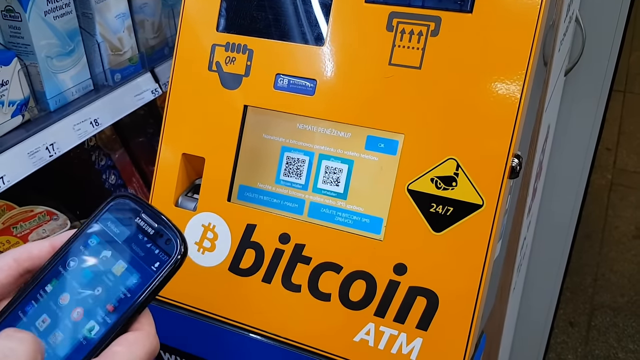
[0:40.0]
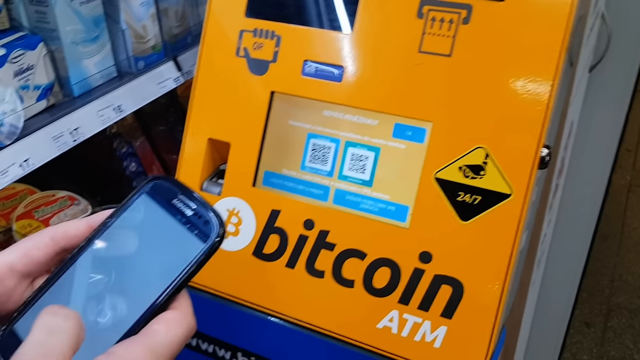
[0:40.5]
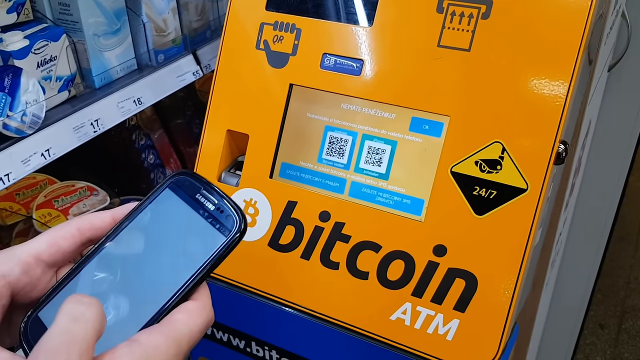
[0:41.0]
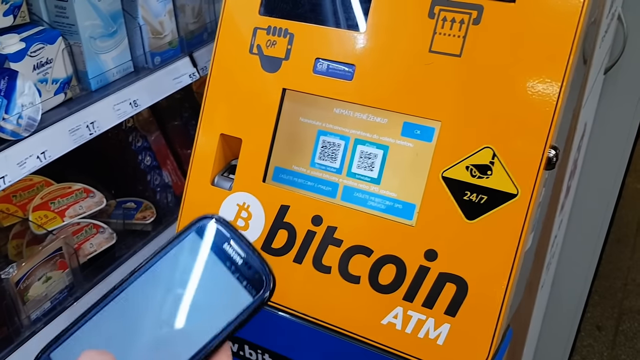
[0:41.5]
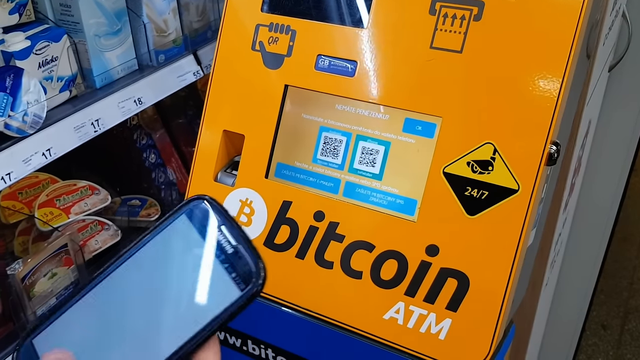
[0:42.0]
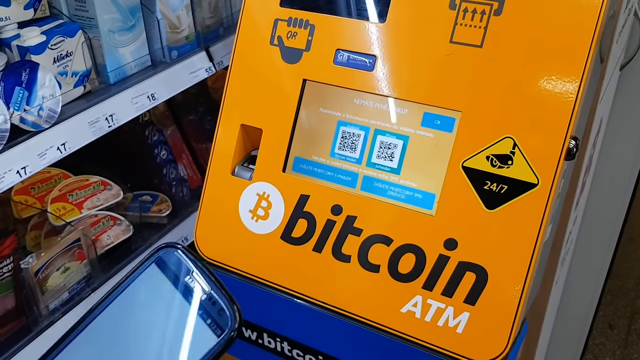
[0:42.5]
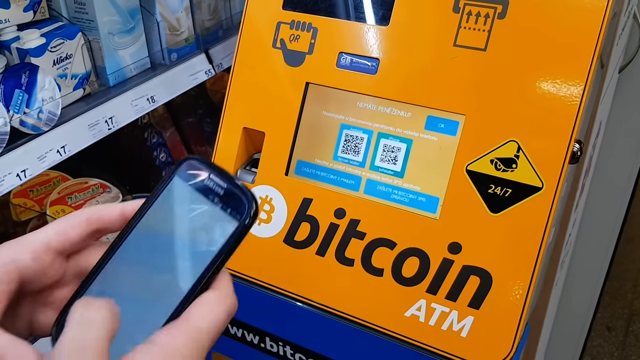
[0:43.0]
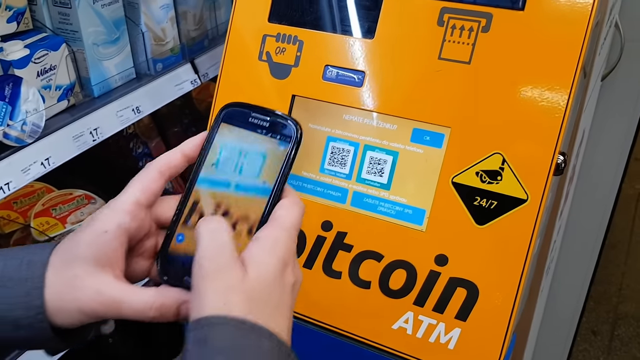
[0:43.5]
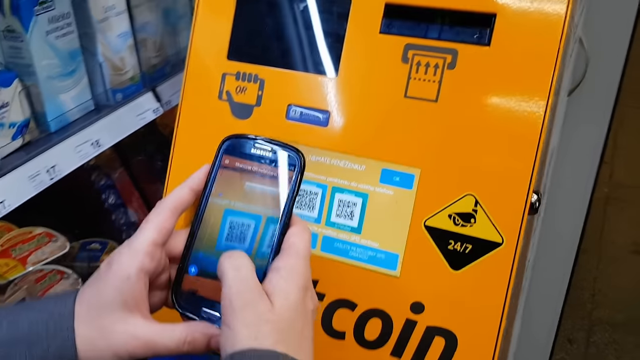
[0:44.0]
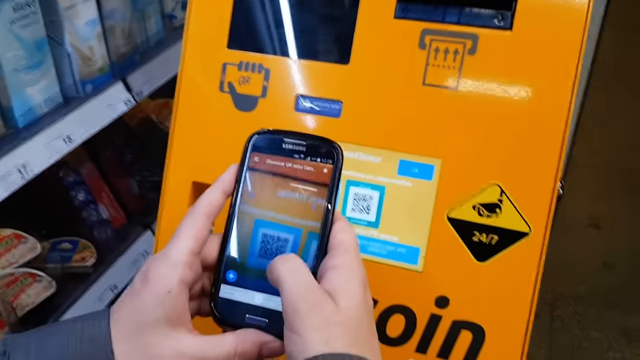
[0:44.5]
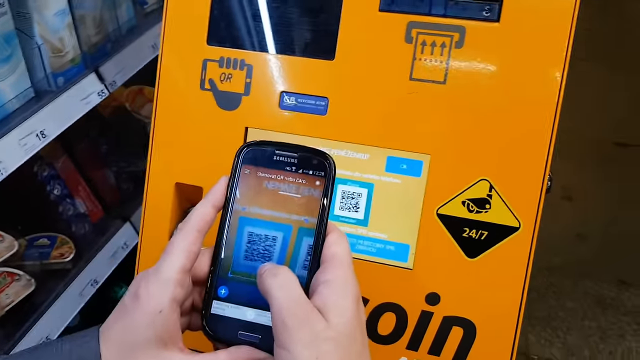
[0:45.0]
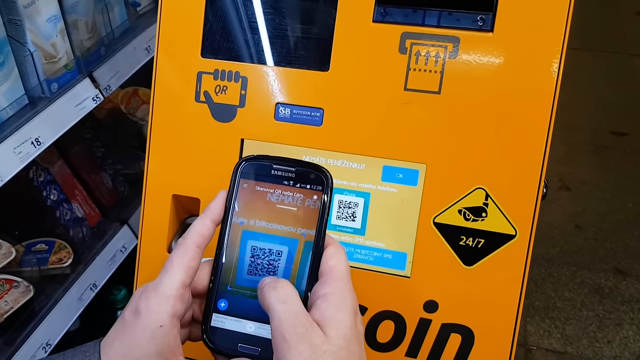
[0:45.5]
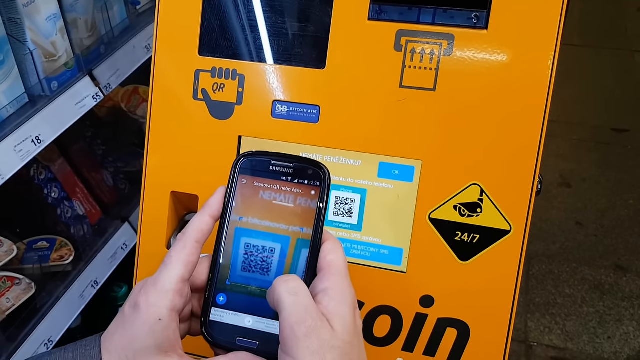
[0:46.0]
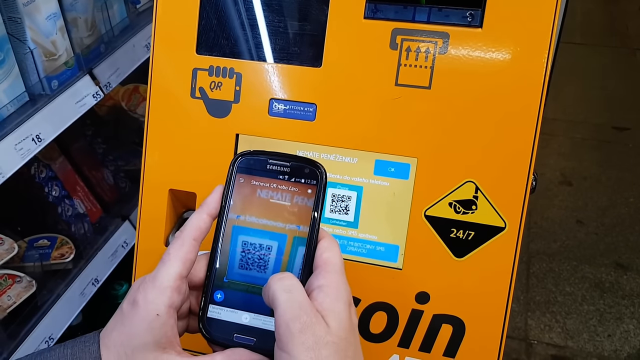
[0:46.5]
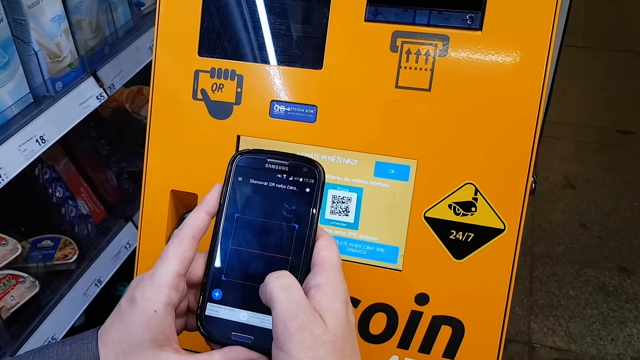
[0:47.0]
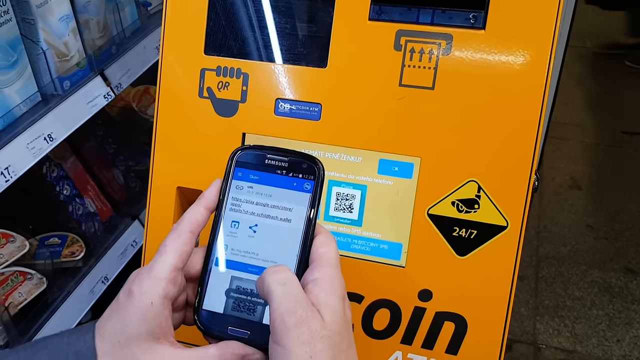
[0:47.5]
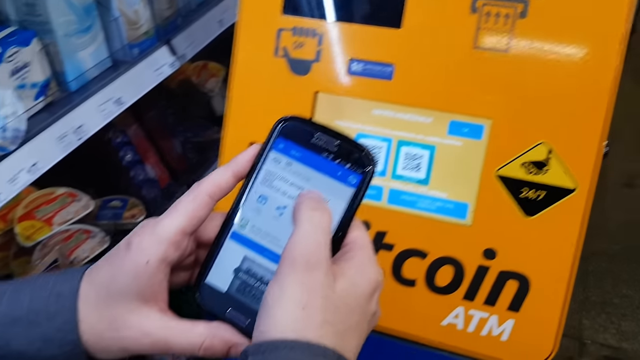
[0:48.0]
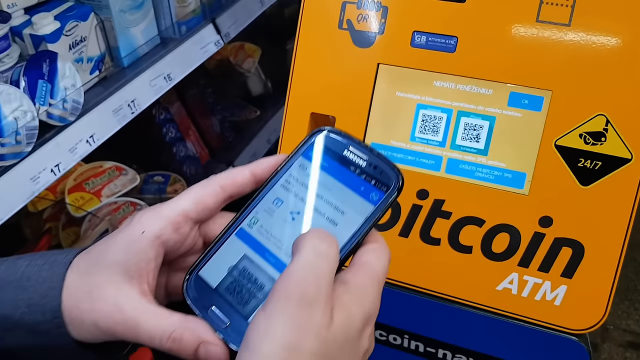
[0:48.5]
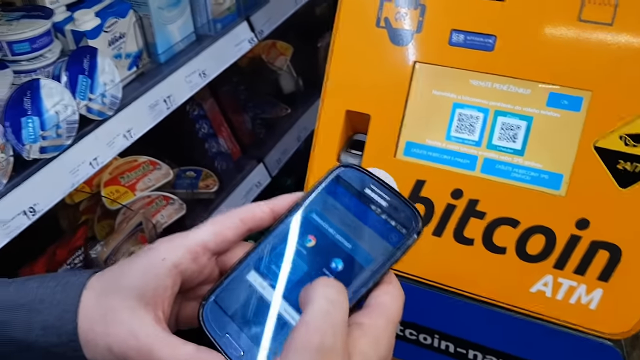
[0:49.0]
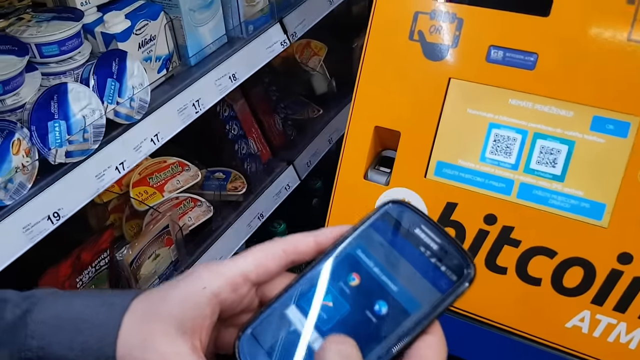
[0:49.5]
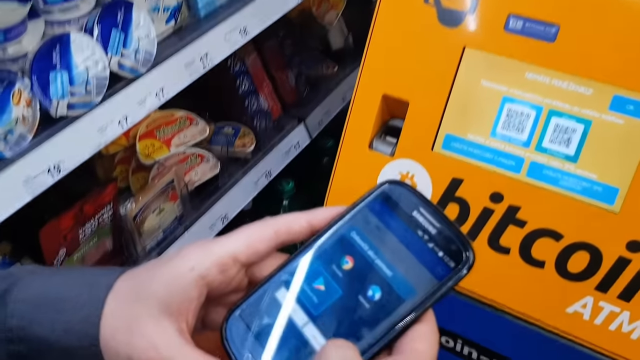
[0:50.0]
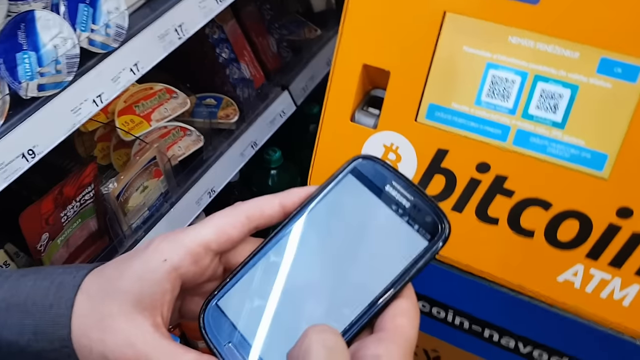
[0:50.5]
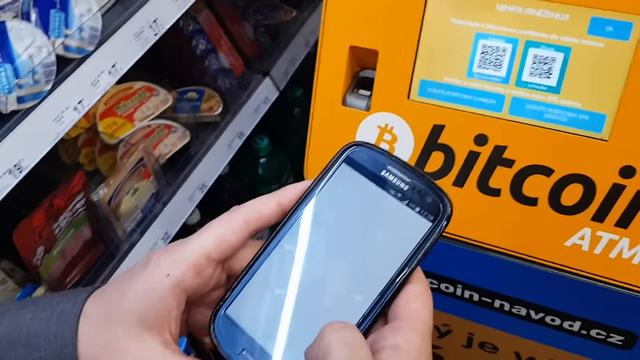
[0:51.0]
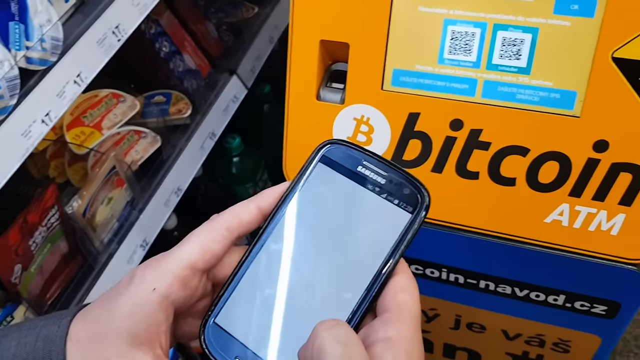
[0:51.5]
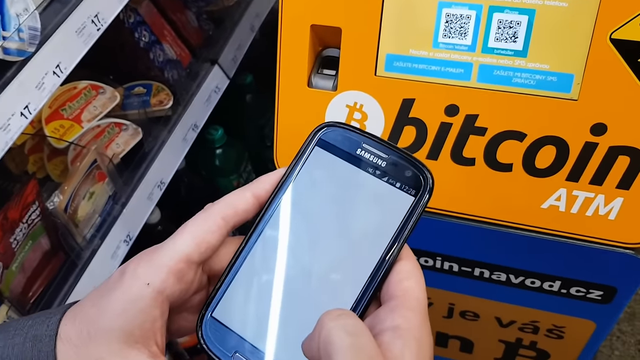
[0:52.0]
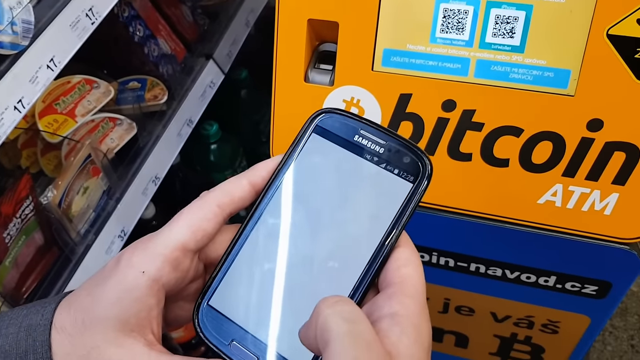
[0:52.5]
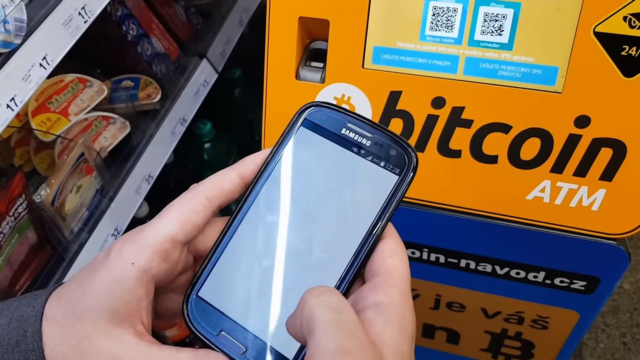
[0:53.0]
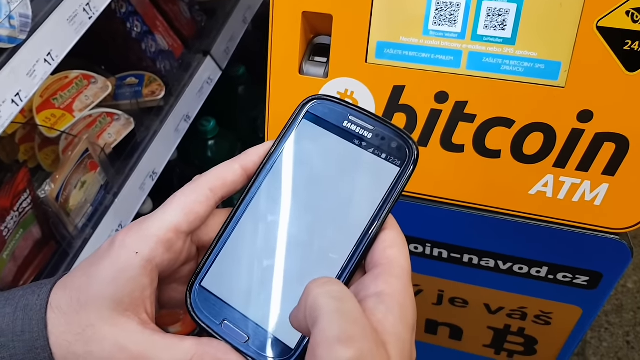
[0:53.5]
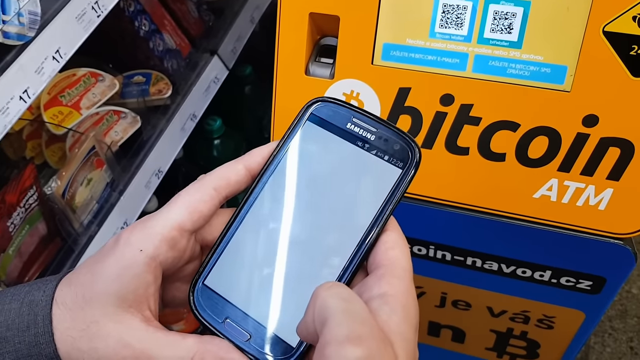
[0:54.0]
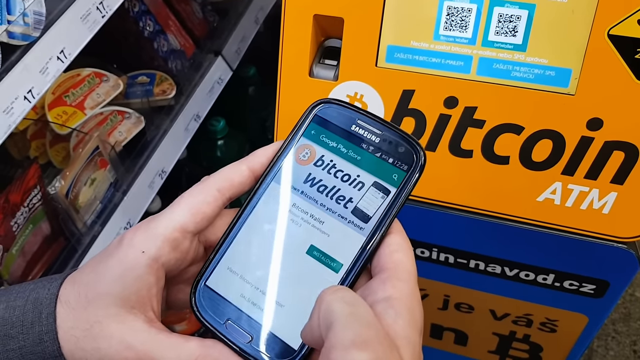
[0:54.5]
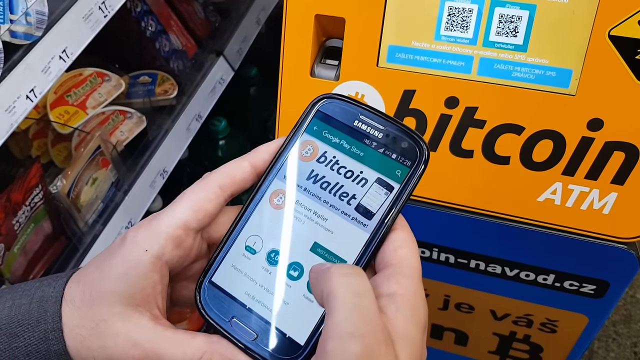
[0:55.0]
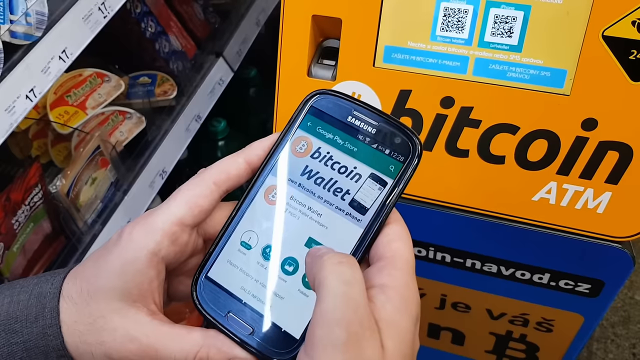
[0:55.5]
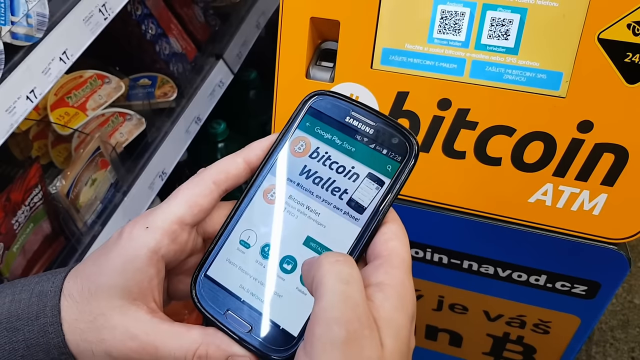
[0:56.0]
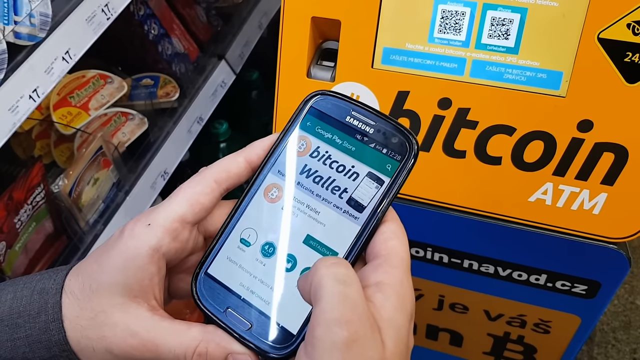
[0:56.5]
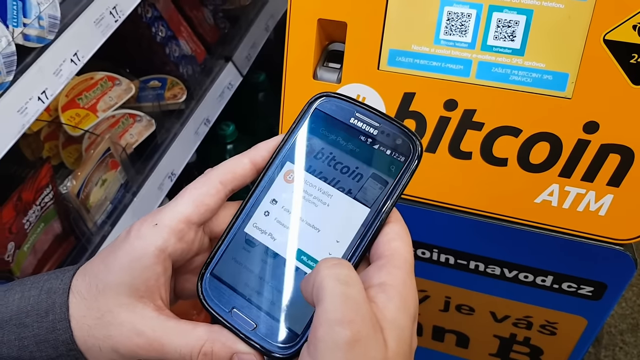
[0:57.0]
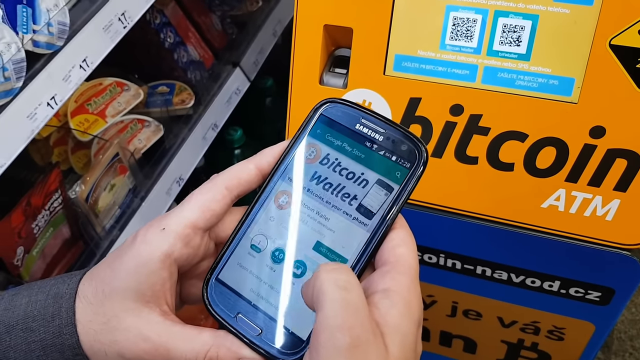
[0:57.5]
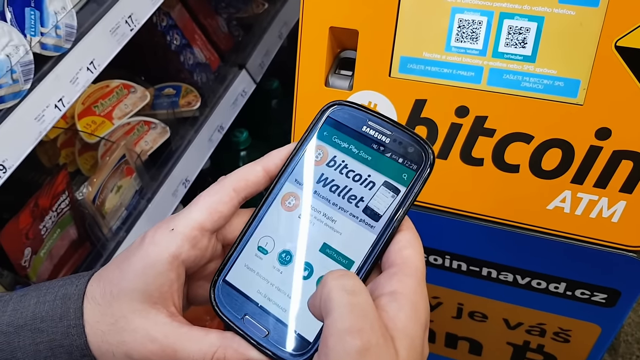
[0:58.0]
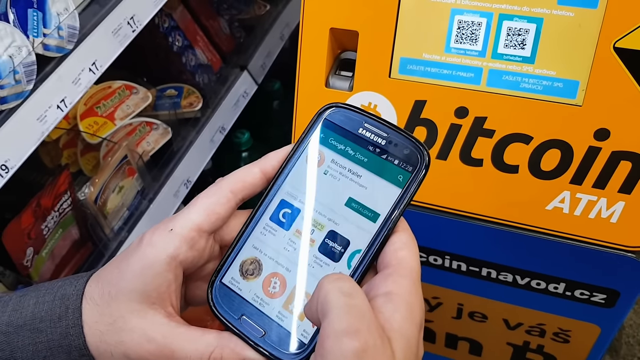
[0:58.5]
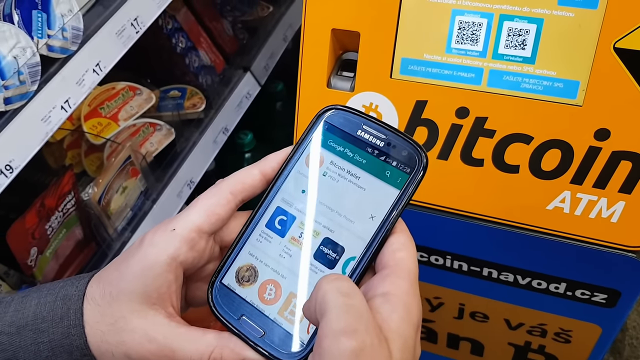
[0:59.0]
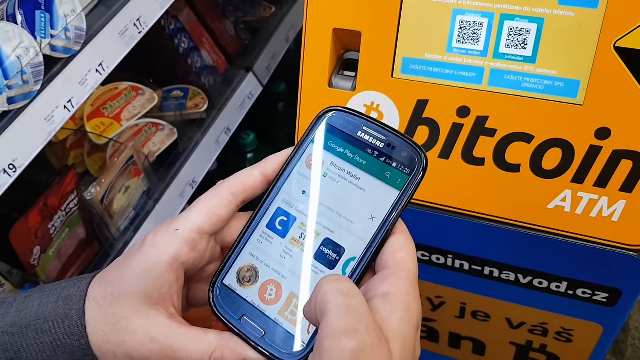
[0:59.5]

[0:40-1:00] The camera shows the Bitcoin ATM from a right angle, with the user in the bottom left-hand corner of the screen holding a cell phone in both hands in front of the ATM. The ATM is mounted to a wall or pillar in the center of a store, with groceries visible on the shelf behind it. With a window brought up on the phone, the user uses both hands and the phone's camera to capture the QR code on the ATM's touchscreen, lining the indicator boxes on the phone up with the QR code until the phone indicates the code has been captured. This brings up an options menu, where the user selects options leading to a Bitcoin wallet. What looks like a download comes up, and the user selects a button giving the phone permission to download the app.